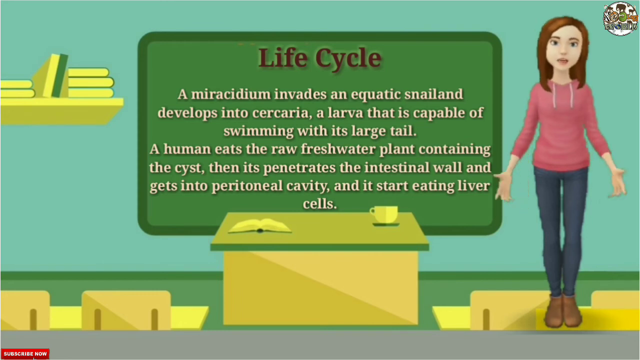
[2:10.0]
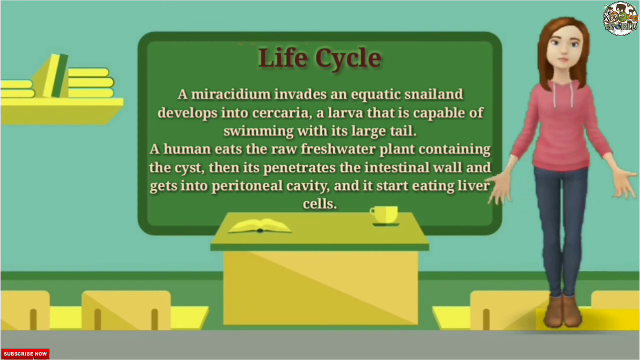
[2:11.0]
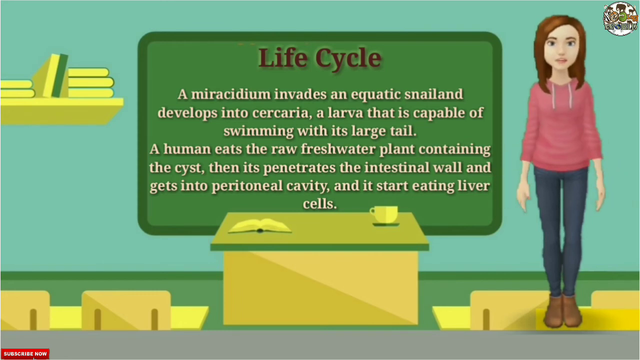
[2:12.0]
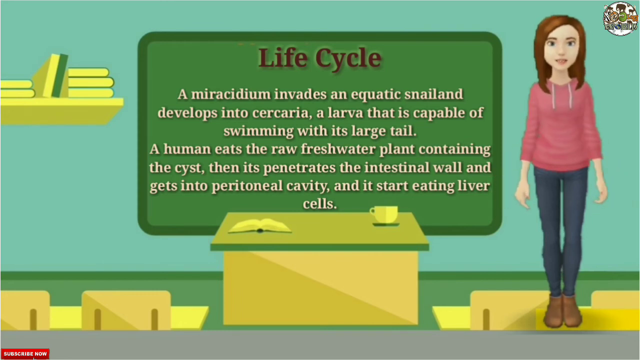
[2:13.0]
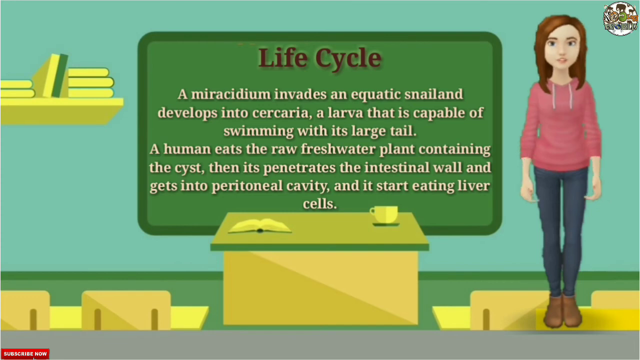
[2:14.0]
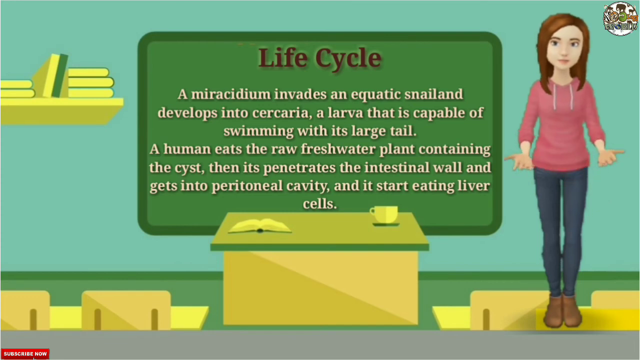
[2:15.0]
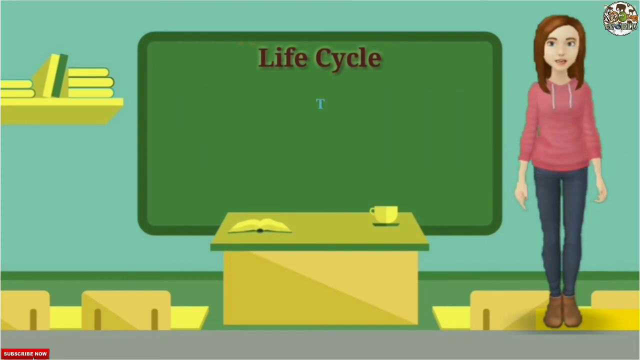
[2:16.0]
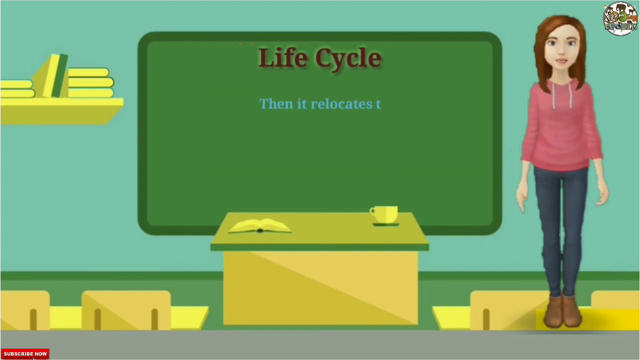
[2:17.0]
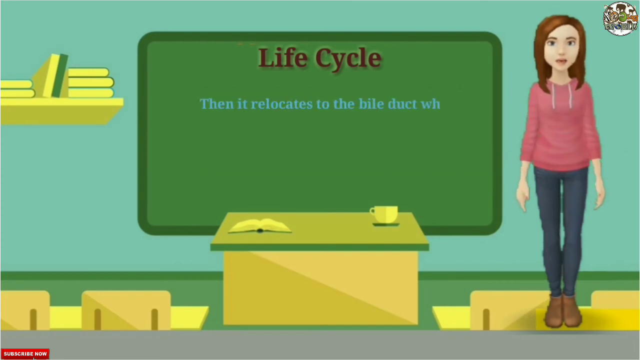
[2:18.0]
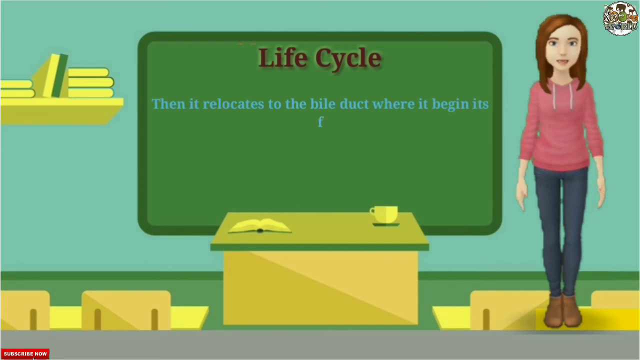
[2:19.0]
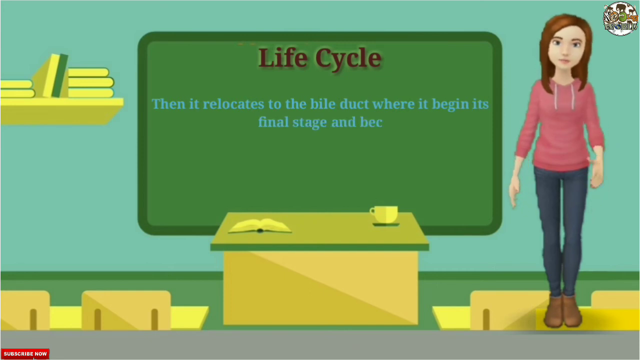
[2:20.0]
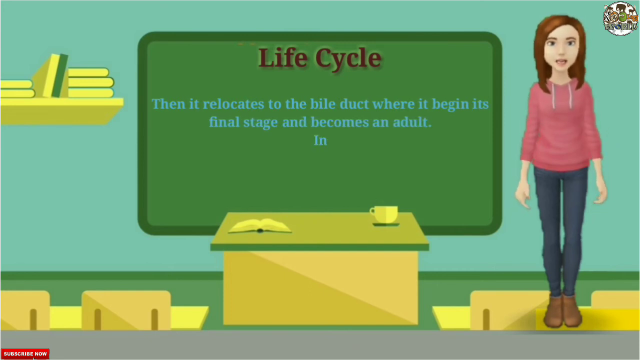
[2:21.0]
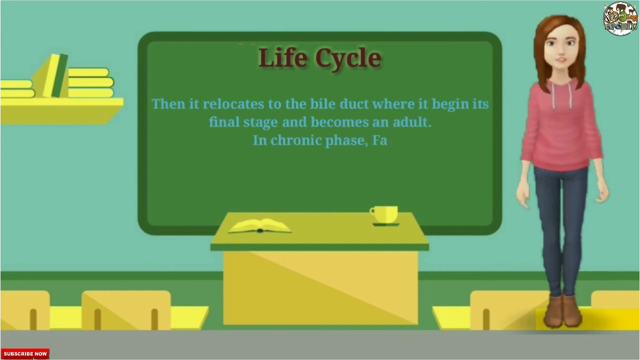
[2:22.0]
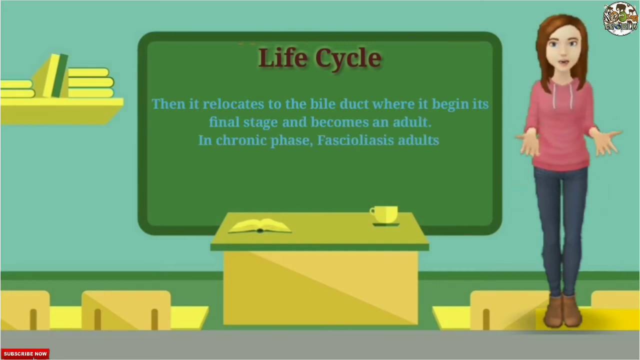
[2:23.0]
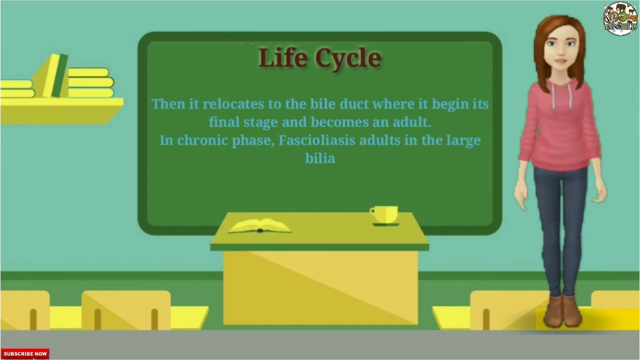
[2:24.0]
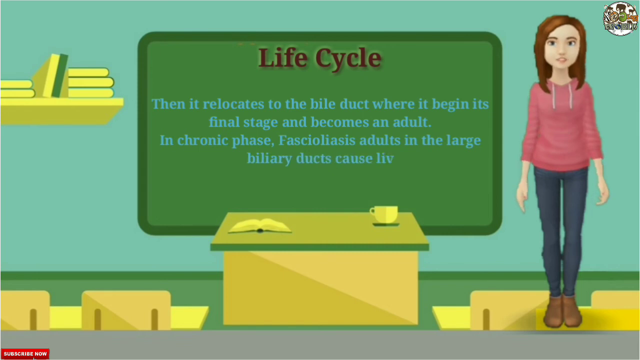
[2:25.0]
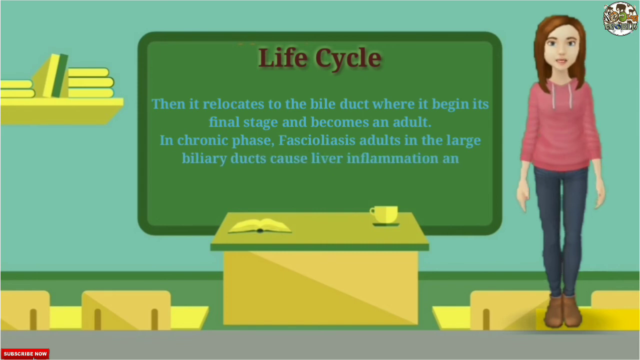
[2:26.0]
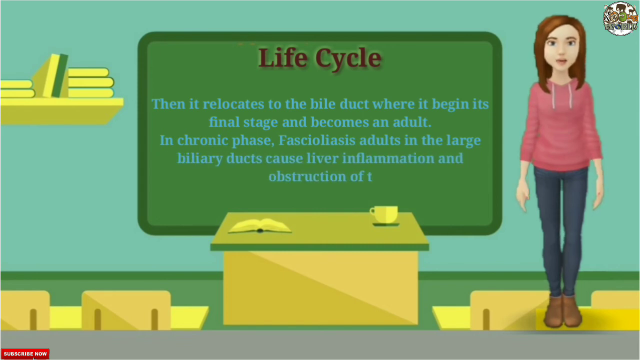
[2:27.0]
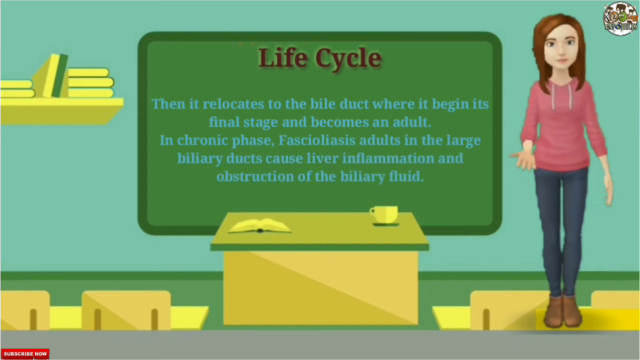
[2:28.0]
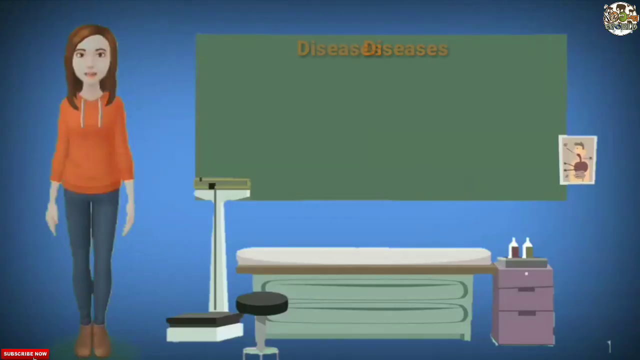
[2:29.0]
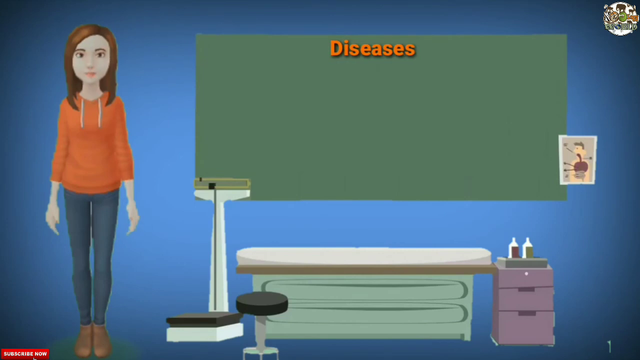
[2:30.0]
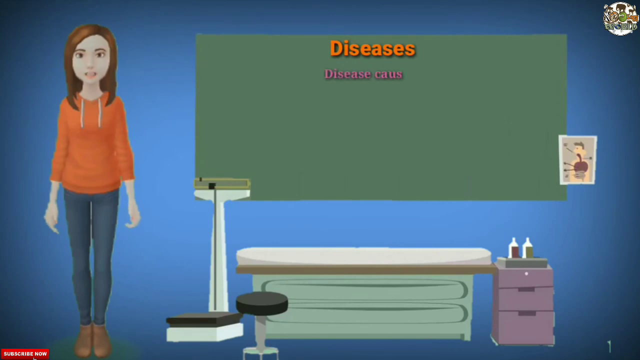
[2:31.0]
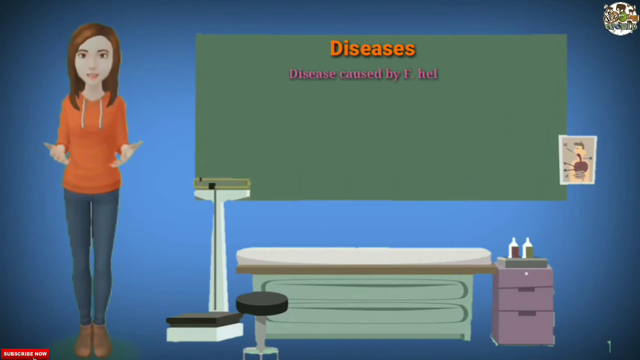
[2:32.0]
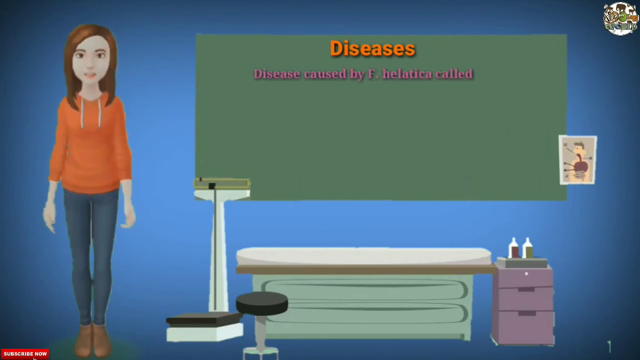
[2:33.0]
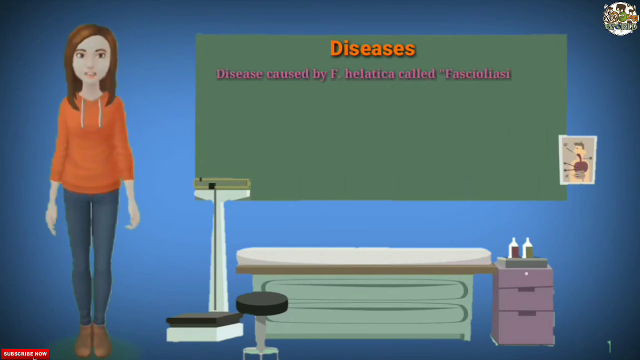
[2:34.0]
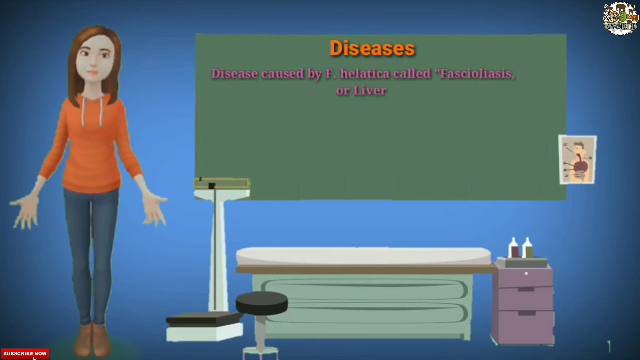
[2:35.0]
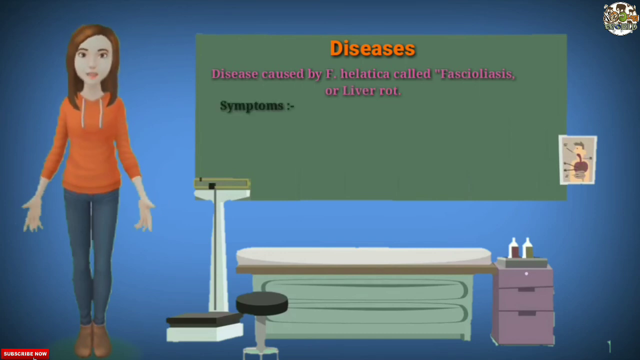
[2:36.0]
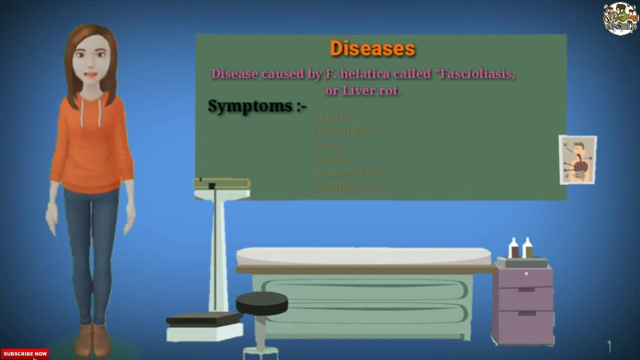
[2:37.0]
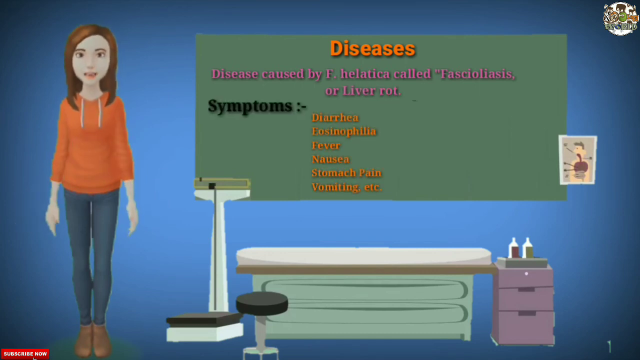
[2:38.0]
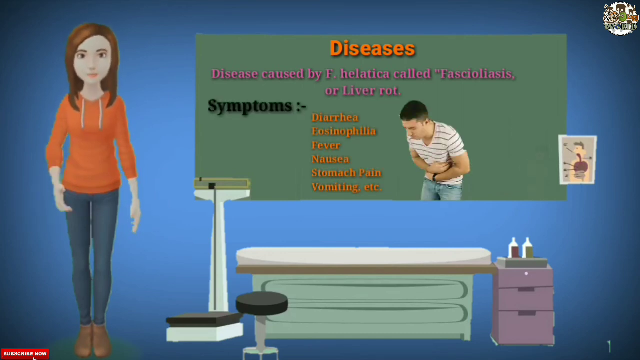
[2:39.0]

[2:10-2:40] The animated teacher presents as text is generated on the blackboard in blue under a large black heading, "life cycle": "Then it relocates to the bile duct where it begins its final stage and becomes an adult. In chronic phase fascioliasis adults in the large biliary ducts cause liver inflammation and obstruction of the biliary fluid." The scene then transitions to what seems to be an animated operating room with a blue background, where the teacher from the classroom now wears an orange hoodie instead of a pink one and stands on the left side of the screen. On the blackboard, the heading "diseases" is written in orange, and purple text appears that includes "called fascioliasis or liver rot." The symptoms then appear: "diarrhea, eosinophilia, fever, nausea, stomach pain, vomiting, etc.", and an image of a man holding his stomach in pain appears next to them.